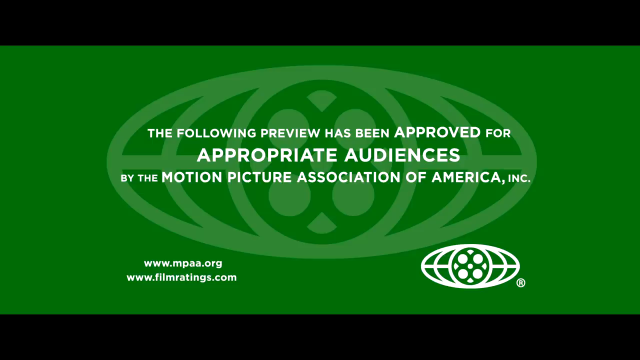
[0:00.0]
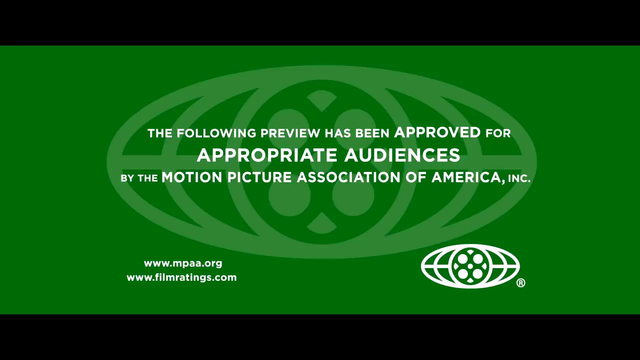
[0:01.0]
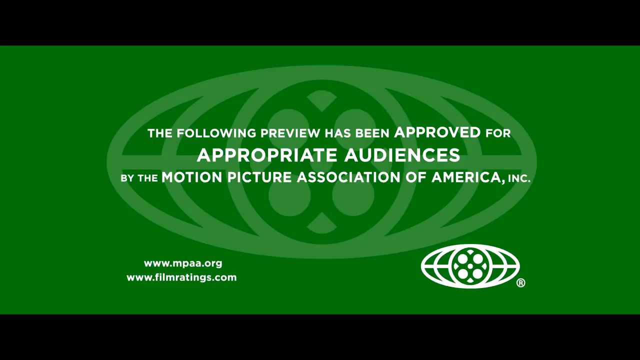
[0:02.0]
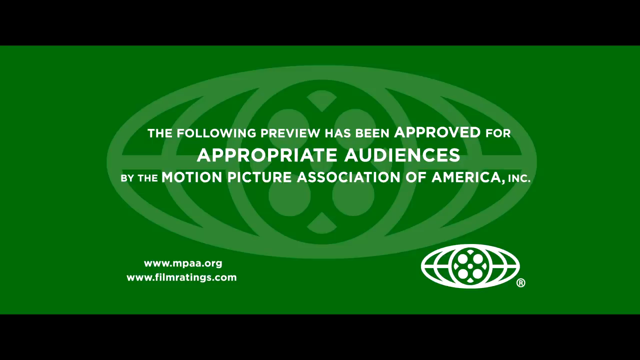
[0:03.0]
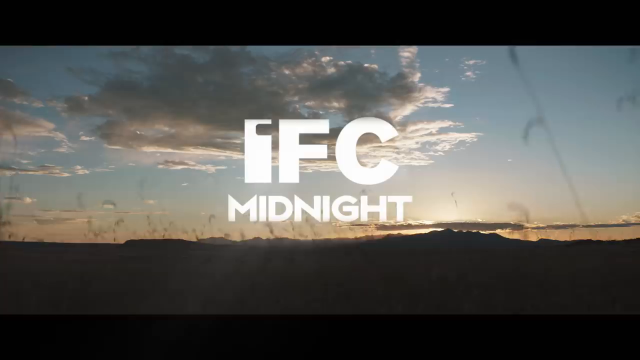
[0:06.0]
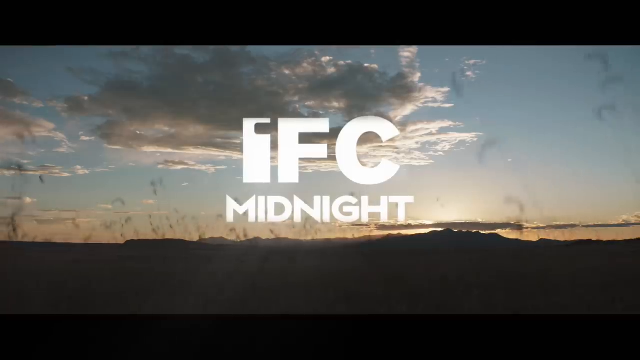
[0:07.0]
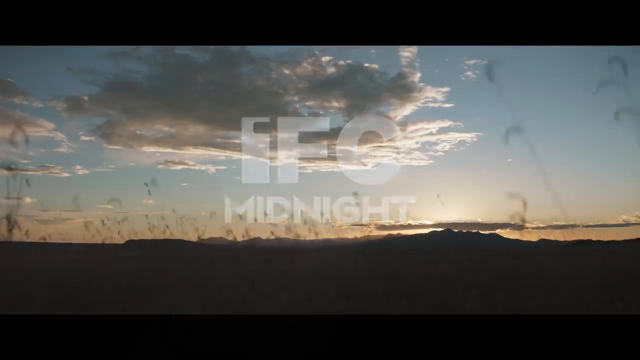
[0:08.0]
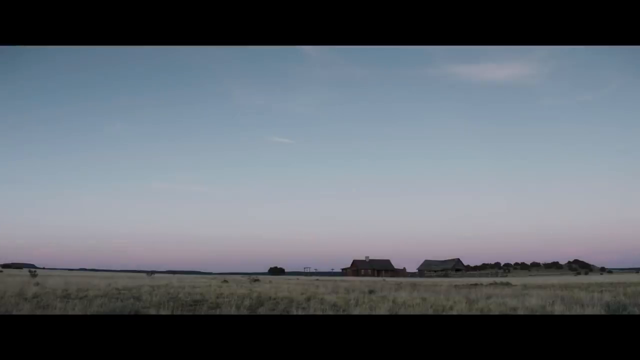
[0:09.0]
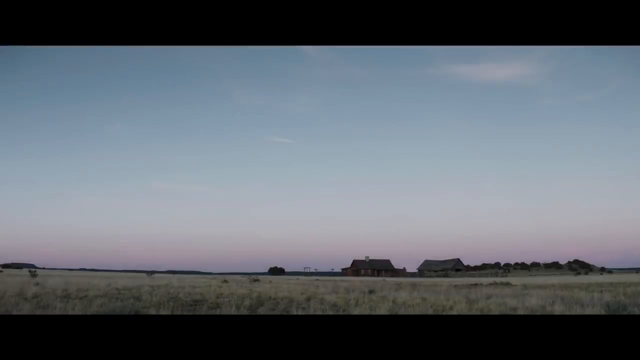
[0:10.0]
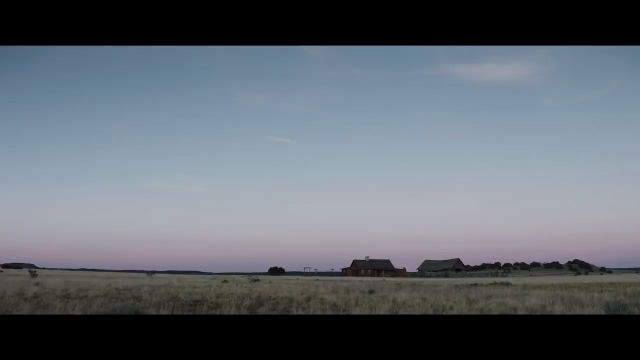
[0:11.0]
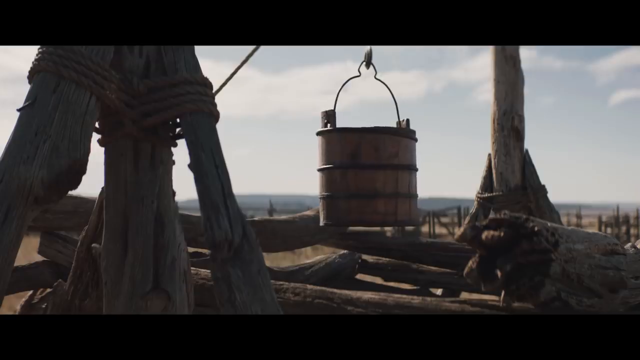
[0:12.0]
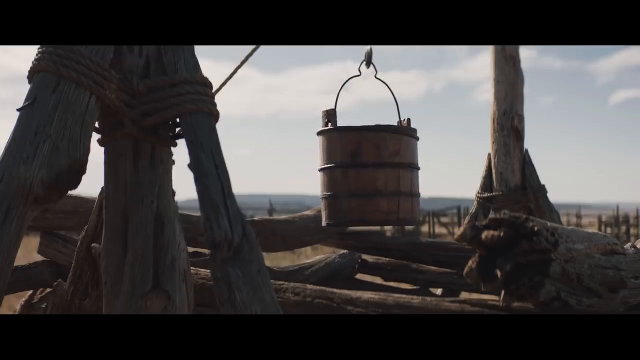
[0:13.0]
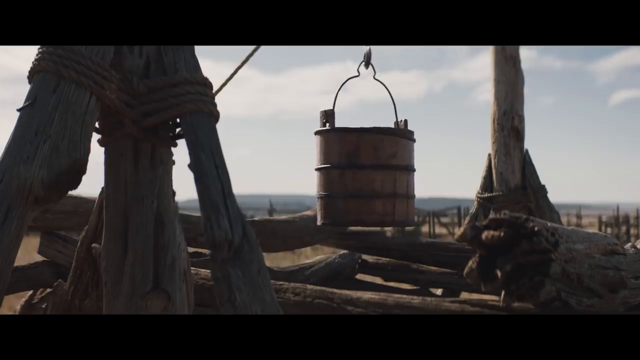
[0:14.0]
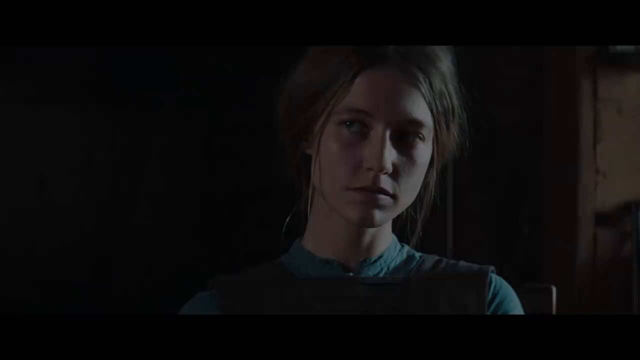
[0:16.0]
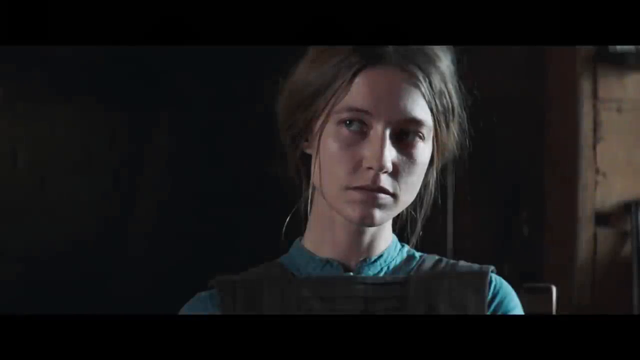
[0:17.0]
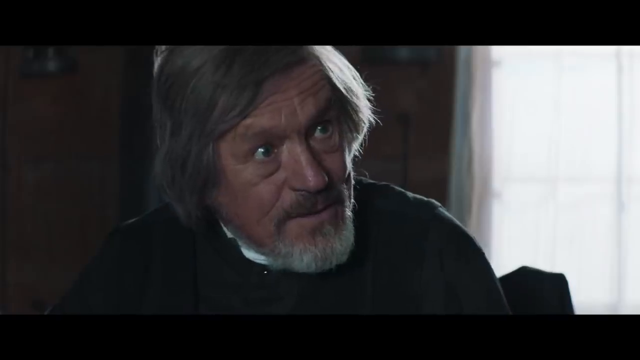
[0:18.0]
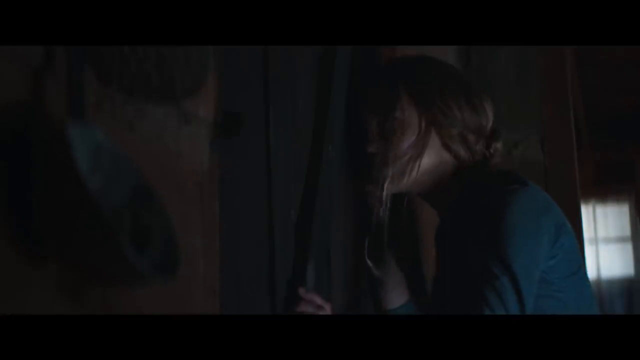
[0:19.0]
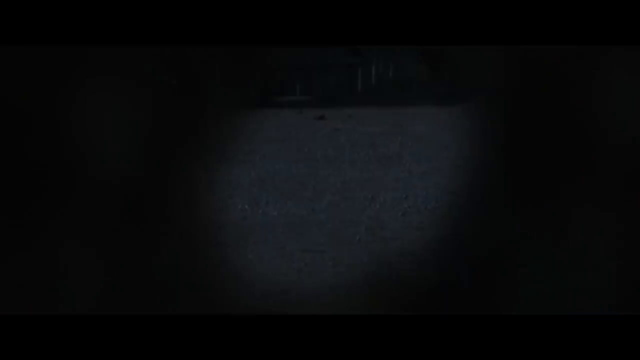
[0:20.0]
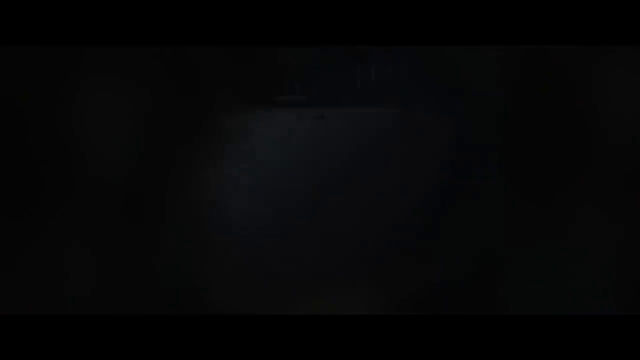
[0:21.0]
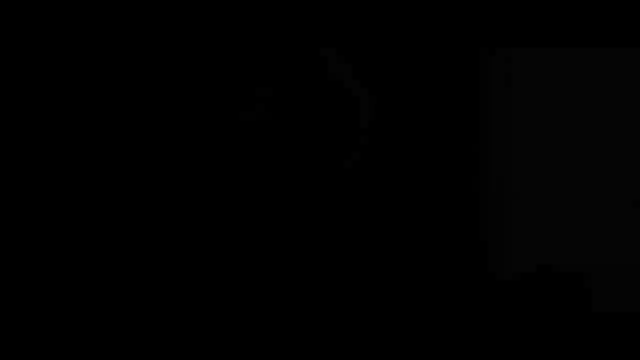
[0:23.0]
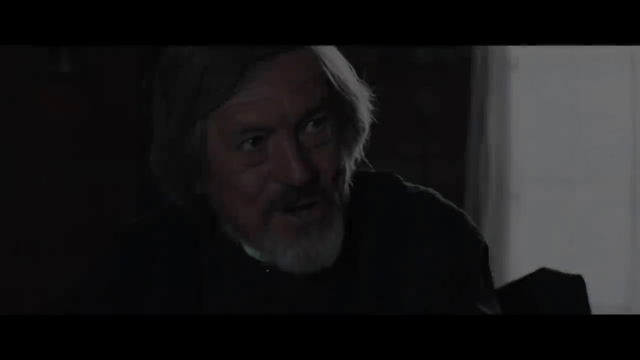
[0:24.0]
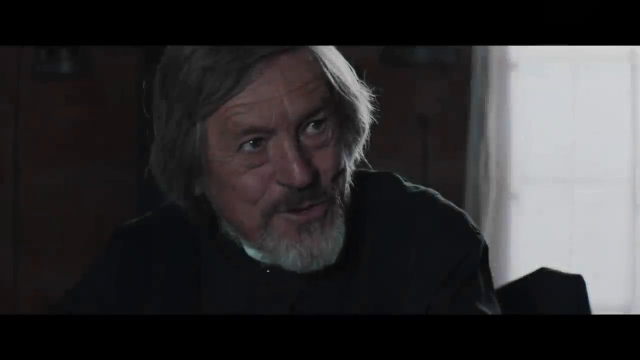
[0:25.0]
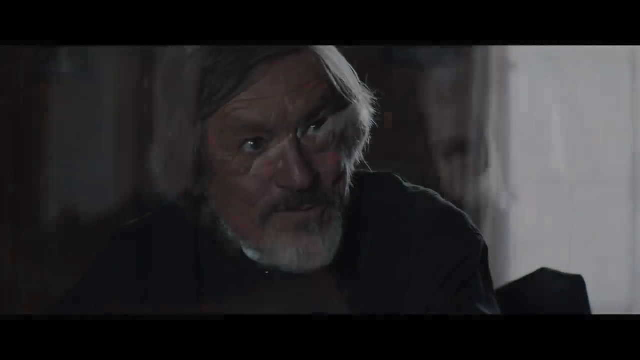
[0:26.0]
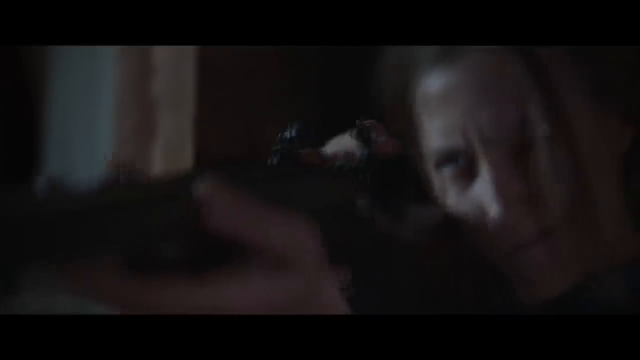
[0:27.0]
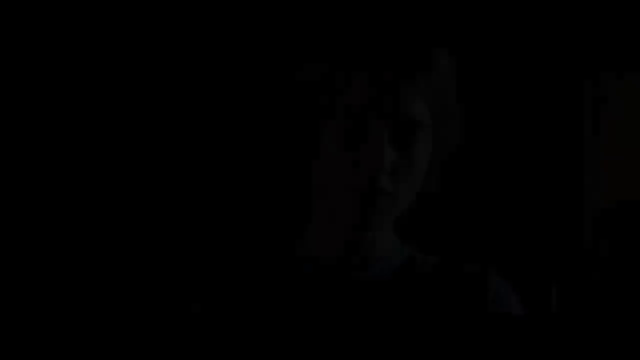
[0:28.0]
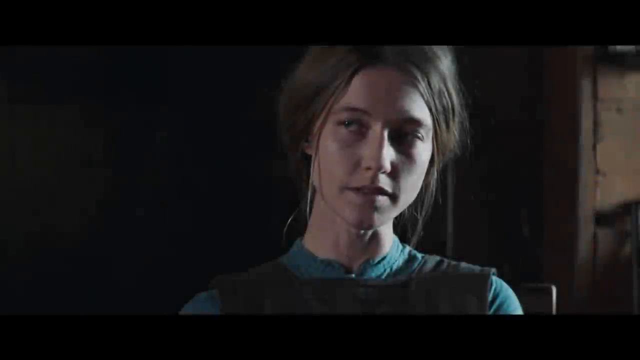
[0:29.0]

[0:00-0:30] A classic green rating screen reads "the following preview has been approved for appropriate audiences by the Motion Picture Association of America," apparently with the MPAA logo. The screen goes to black and shows "IFC midnight." Next comes a shot of an open blue sky that is also somewhat orange, apparently at sunrise or sunset, with some clouds, what looks like wheat or grassy fields, and hills in the background. The shot changes to open, bluish-purple sky with very few clouds and pale green grass, then some rustic-looking houses, probably a barnyard. The camera zooms in on a wood pile; it looks like a wood structure with a barrel hanging from it. After a vignette, the picture opens on a Caucasian woman with messy brown hair, apparently wearing a dress and an apron. She appears to be talking to a priest, who seems to wear a black coat or black shirt with a white collar. She seems to be in a room, looking at something, spying on the priest. She has a gun and points it at the priest, and then she is shown talking again.